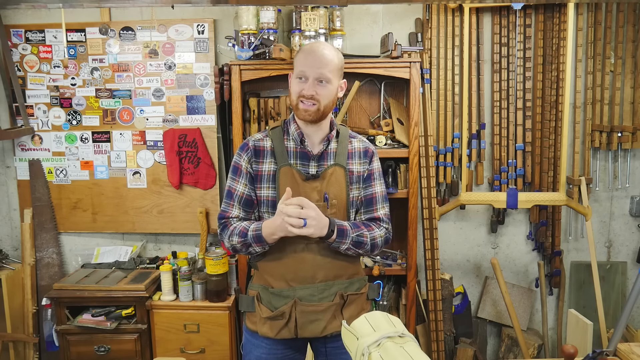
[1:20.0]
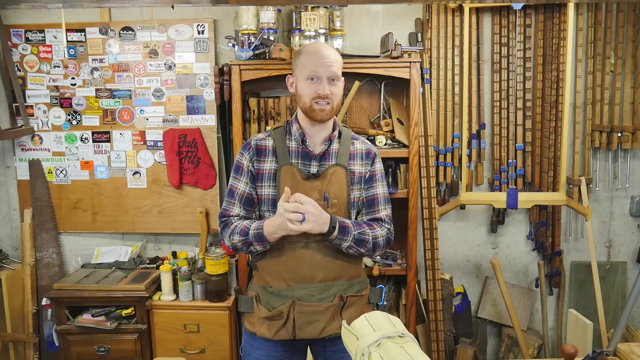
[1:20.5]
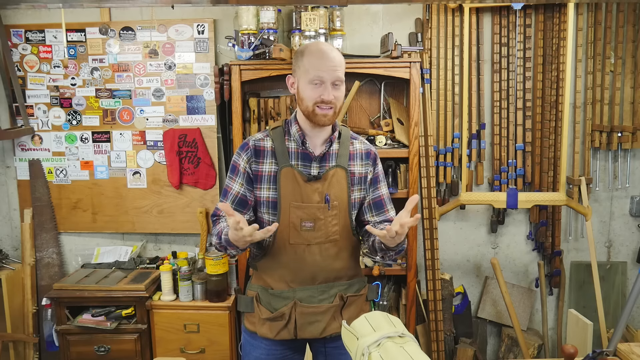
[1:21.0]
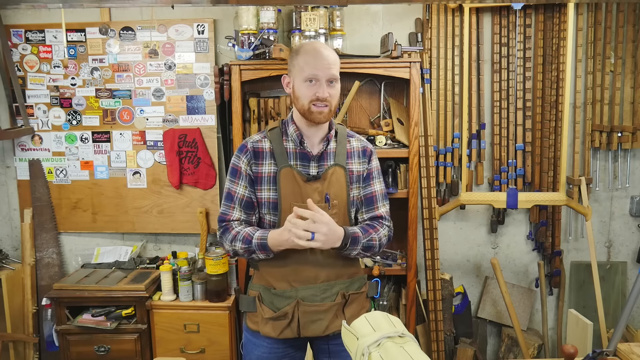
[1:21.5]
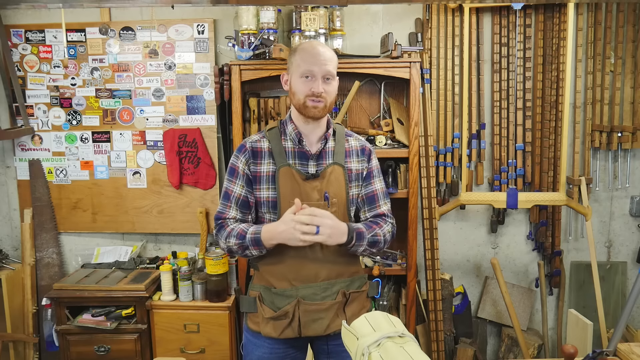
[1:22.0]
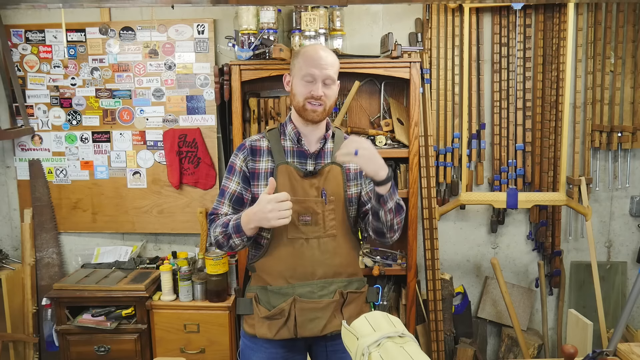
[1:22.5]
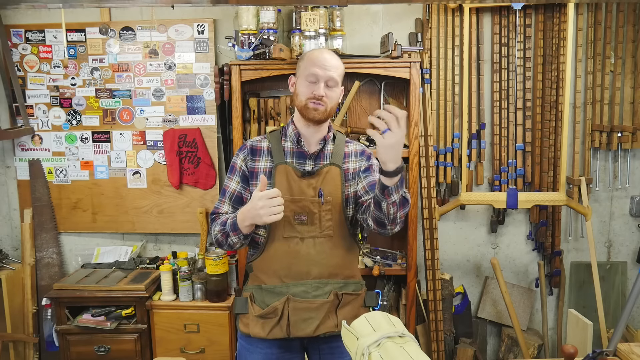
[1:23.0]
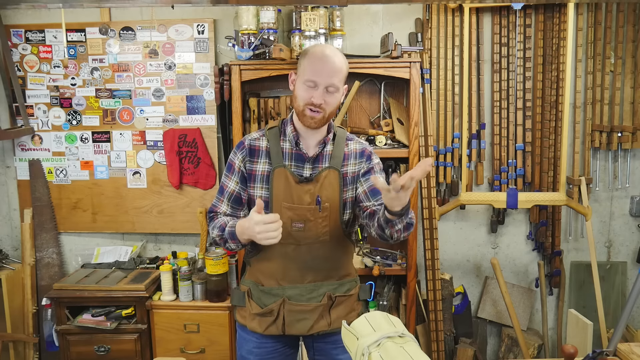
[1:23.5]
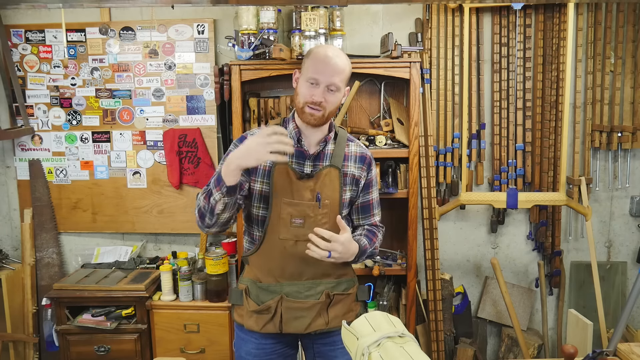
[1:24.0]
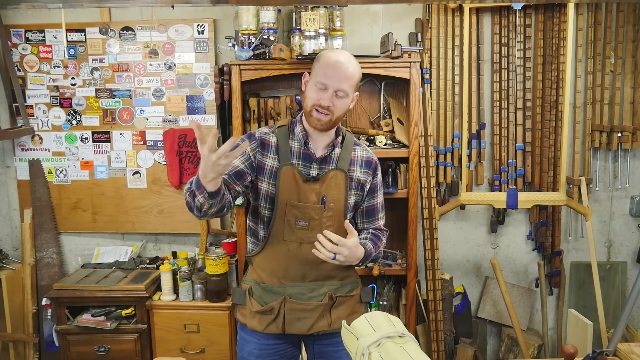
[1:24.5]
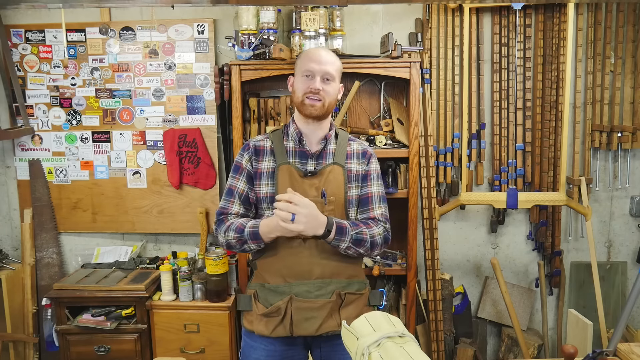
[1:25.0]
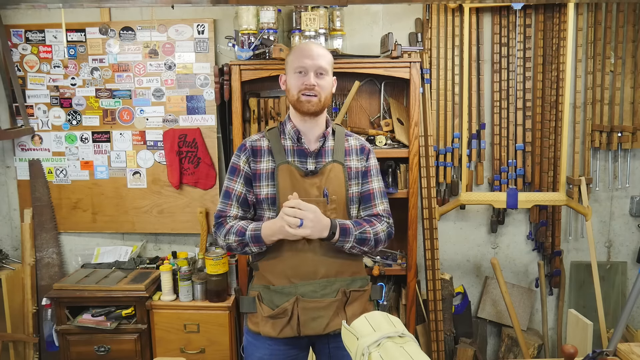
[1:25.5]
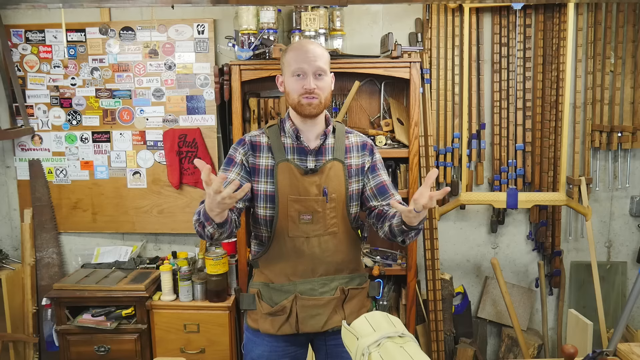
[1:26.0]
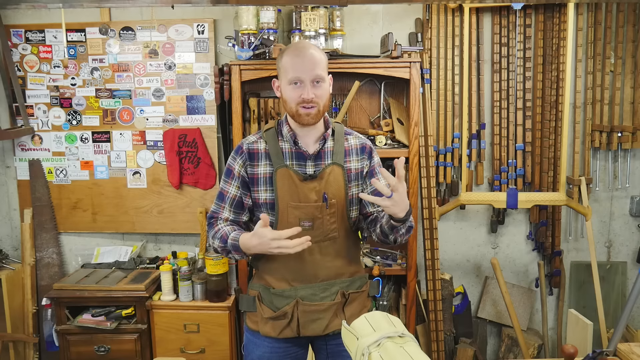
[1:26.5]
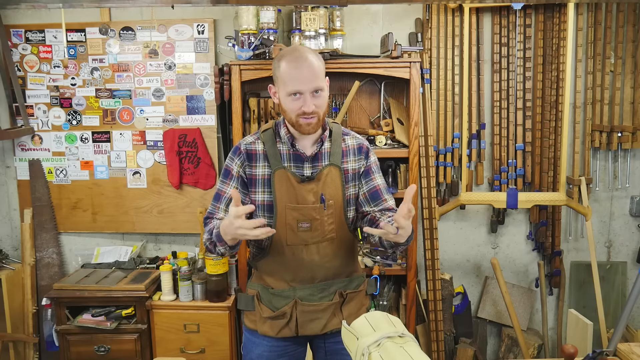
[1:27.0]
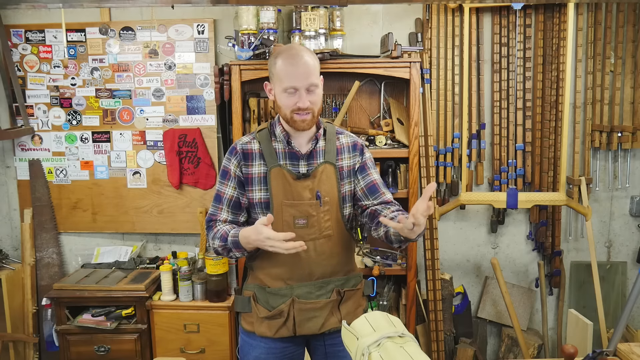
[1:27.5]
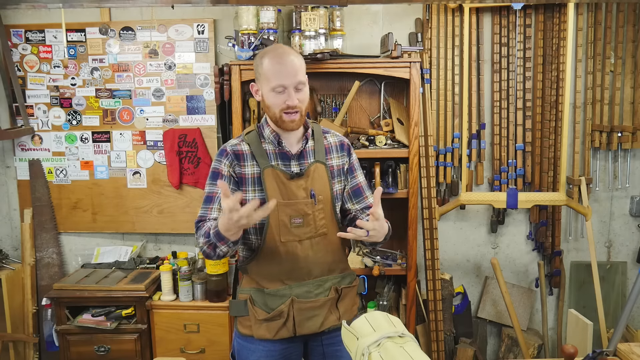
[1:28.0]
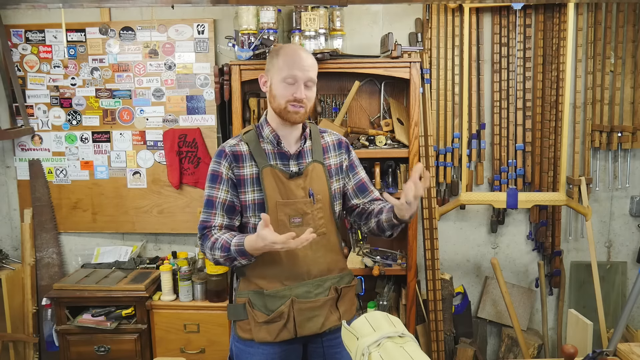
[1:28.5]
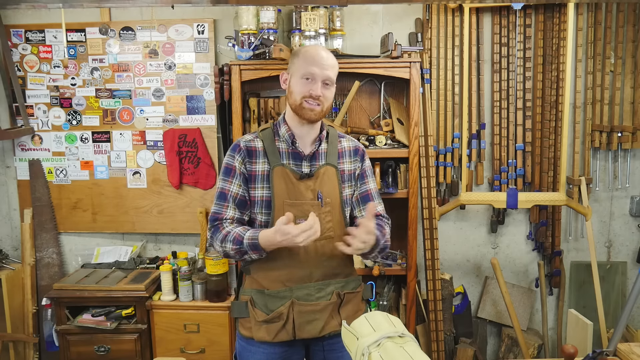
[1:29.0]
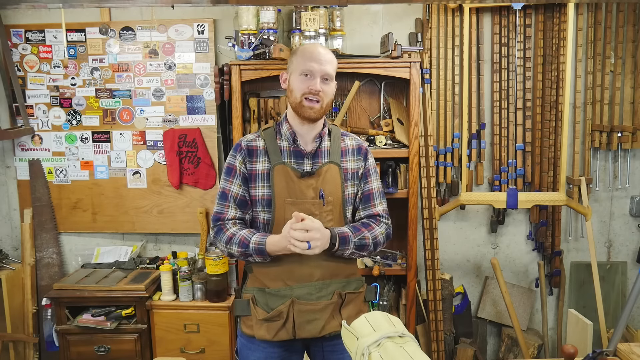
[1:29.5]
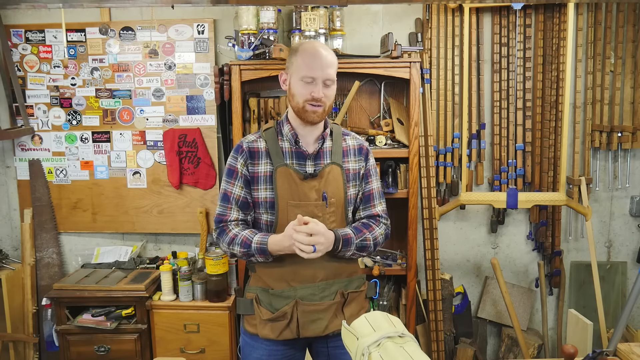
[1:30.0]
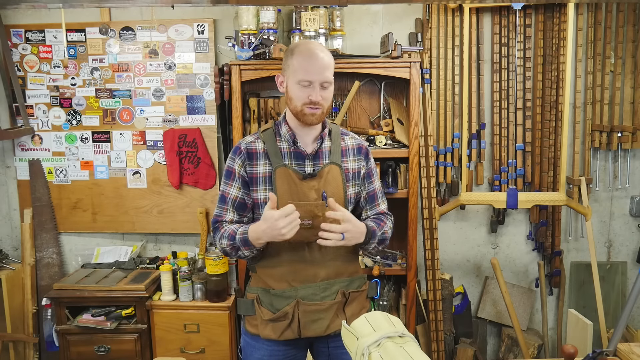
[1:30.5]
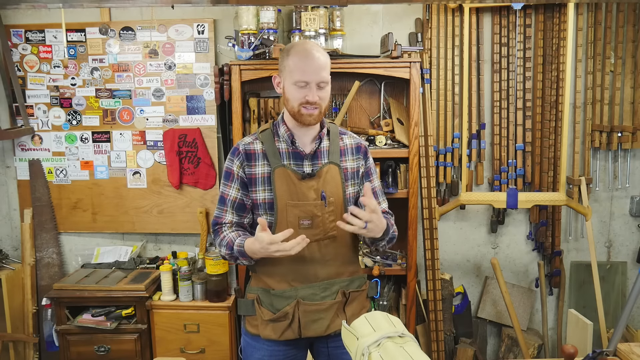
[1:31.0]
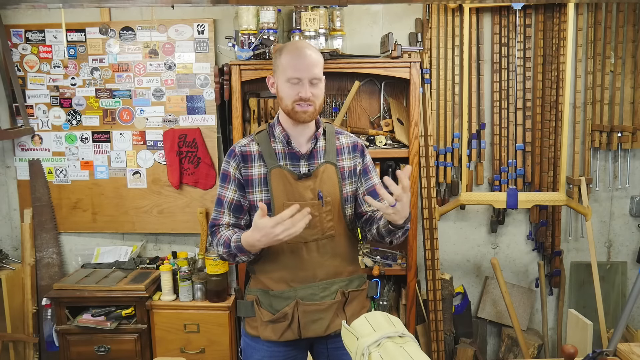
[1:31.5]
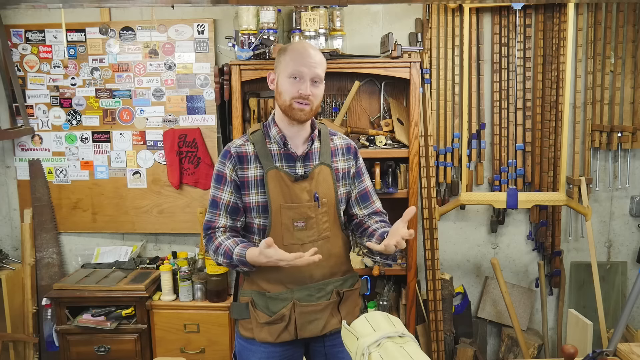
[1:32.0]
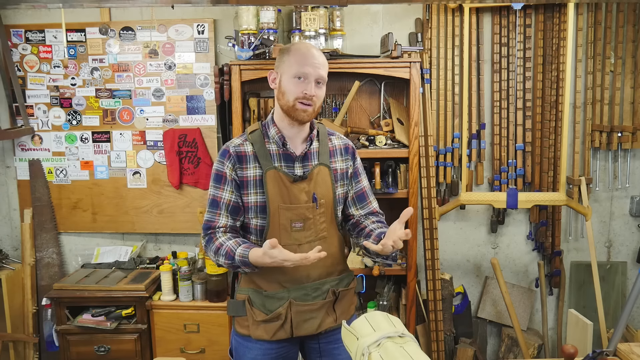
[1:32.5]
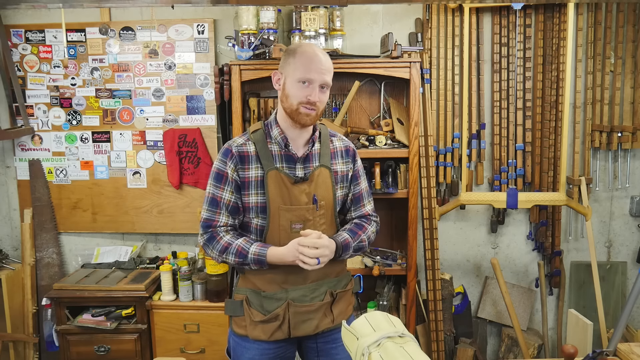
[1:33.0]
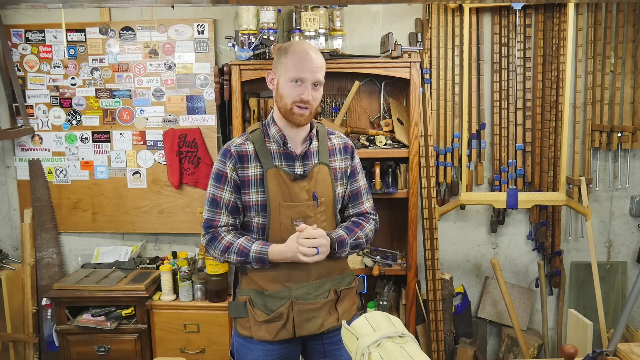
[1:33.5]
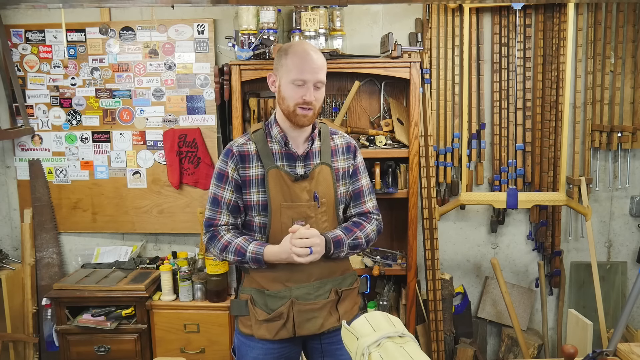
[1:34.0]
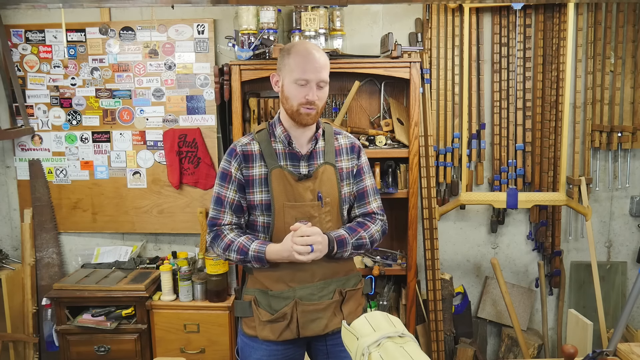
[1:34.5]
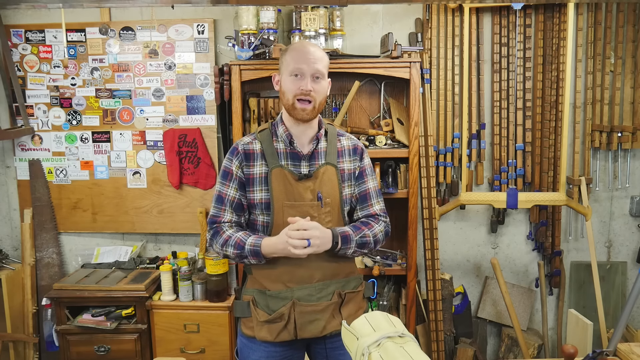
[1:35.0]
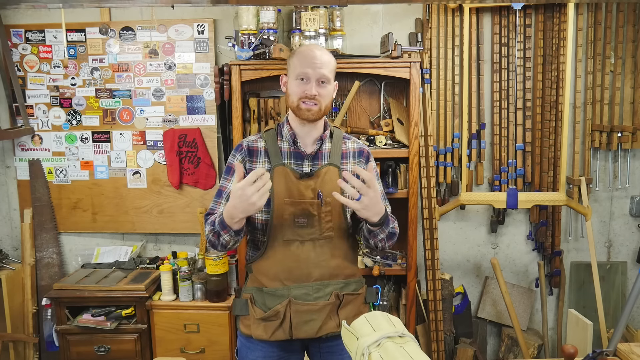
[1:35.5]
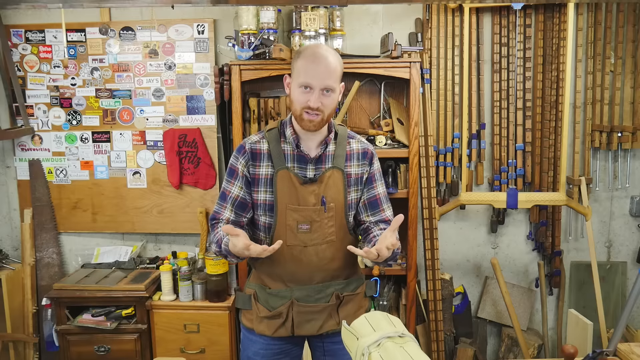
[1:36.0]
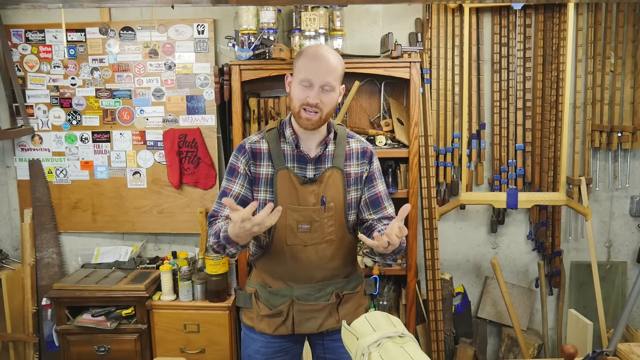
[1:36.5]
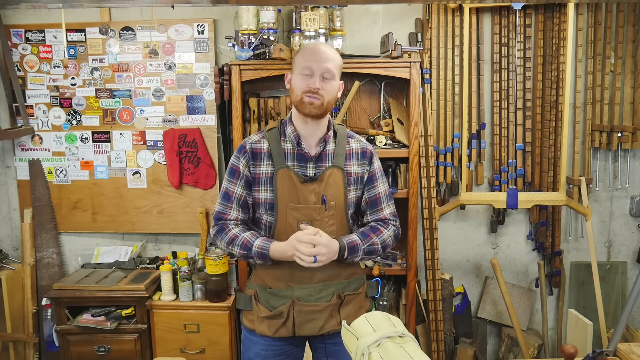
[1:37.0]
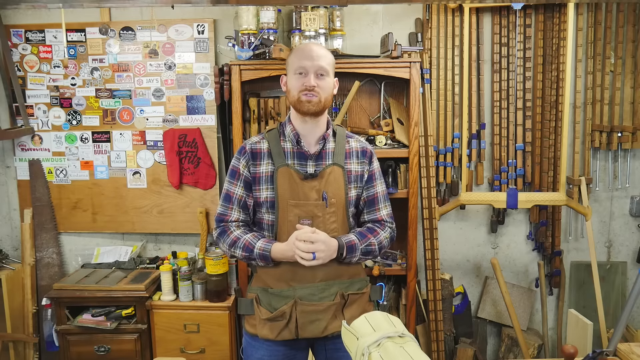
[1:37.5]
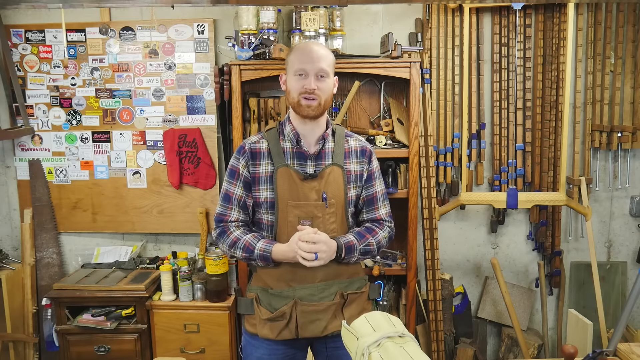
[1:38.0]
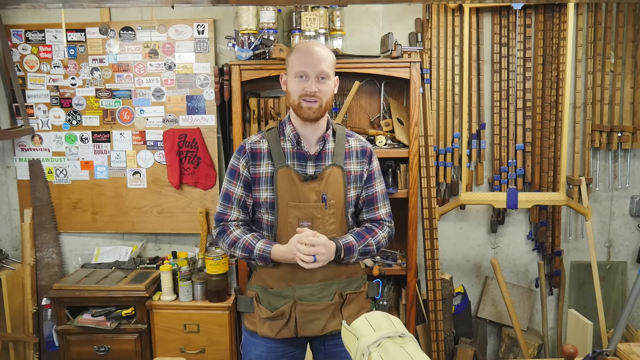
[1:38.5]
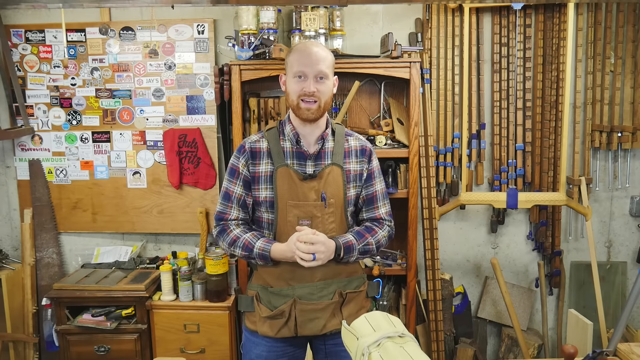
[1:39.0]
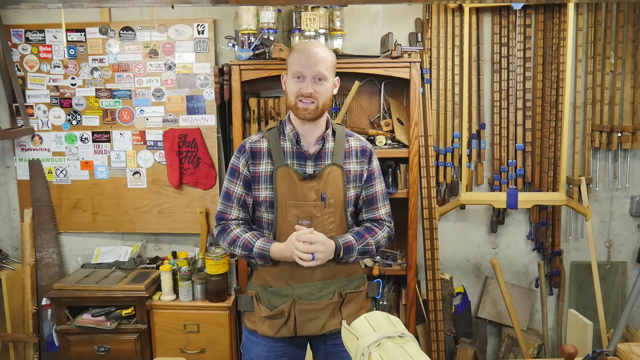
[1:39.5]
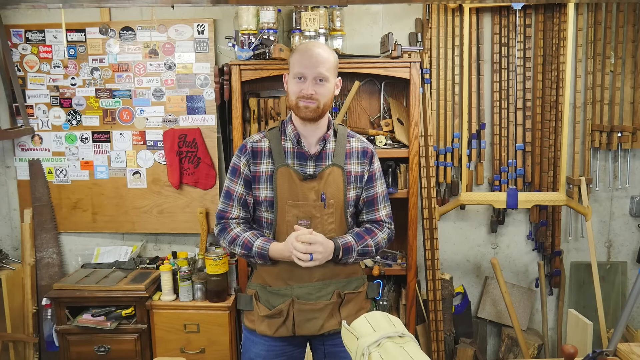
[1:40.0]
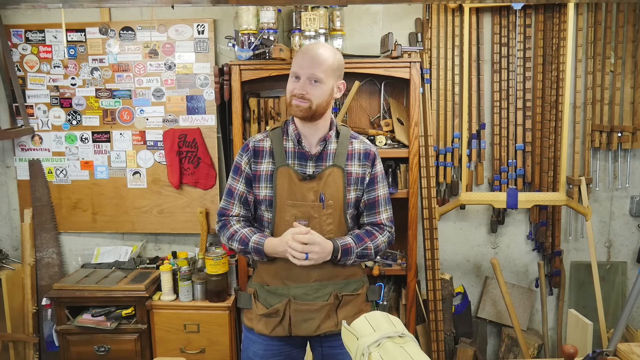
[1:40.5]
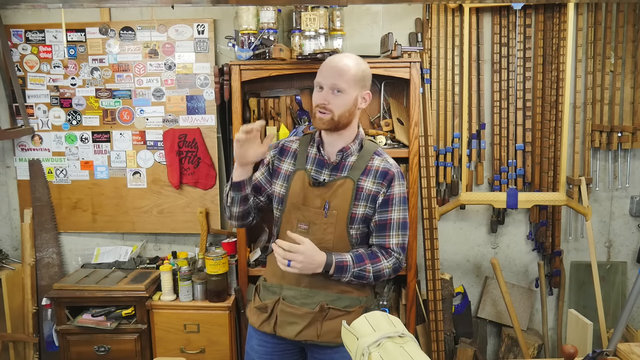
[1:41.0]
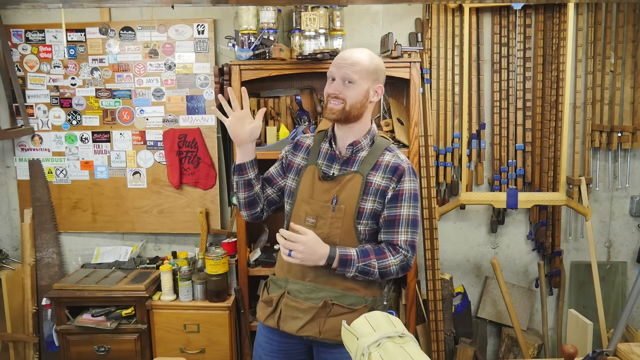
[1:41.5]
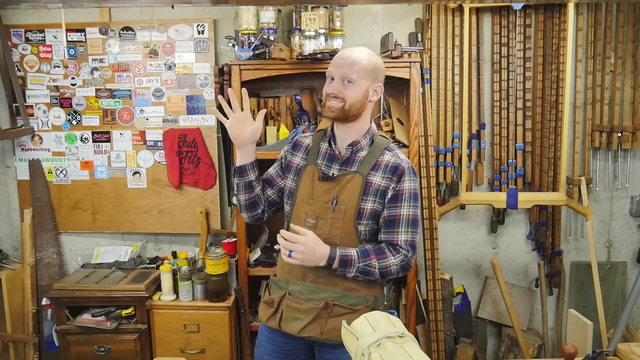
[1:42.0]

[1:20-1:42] The man continues talking in much the same way. He looks excited and seems to be enjoying his work.